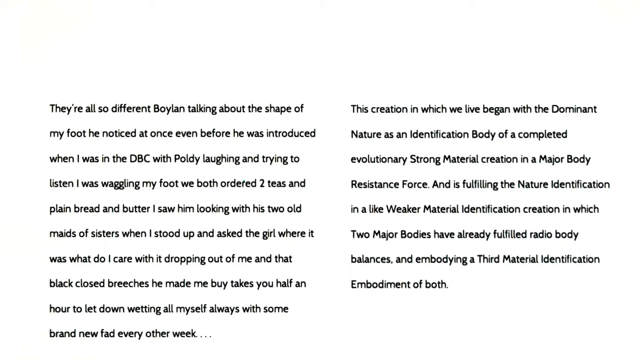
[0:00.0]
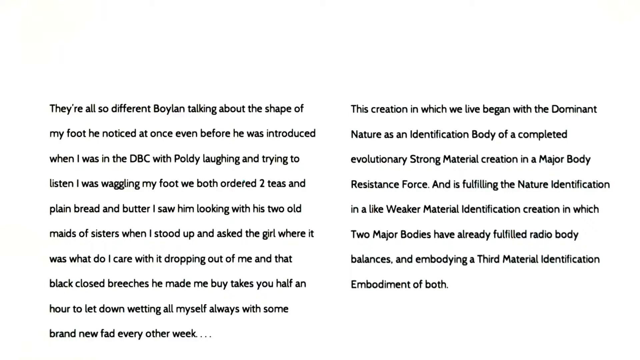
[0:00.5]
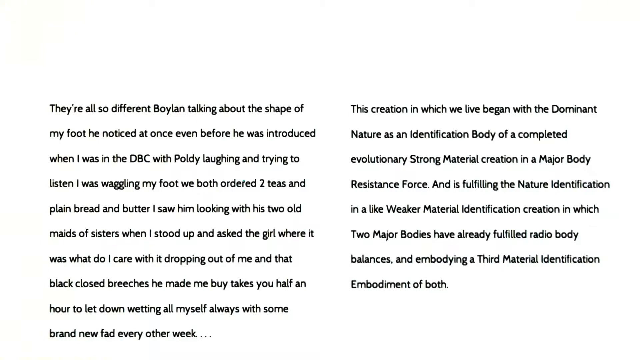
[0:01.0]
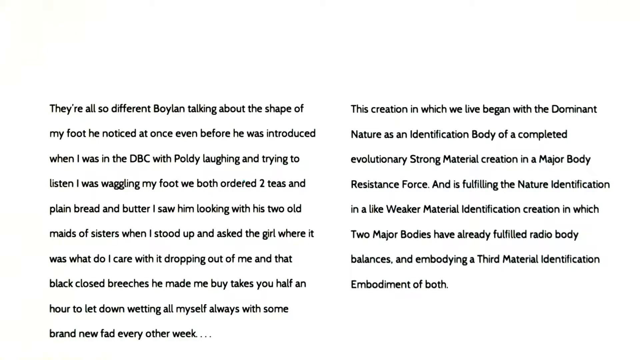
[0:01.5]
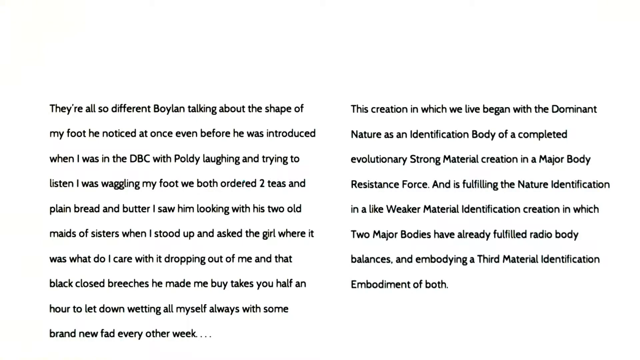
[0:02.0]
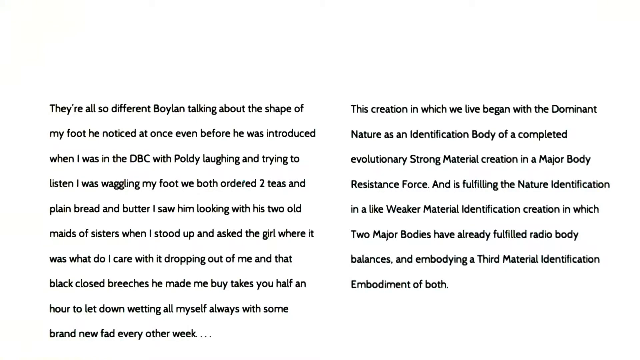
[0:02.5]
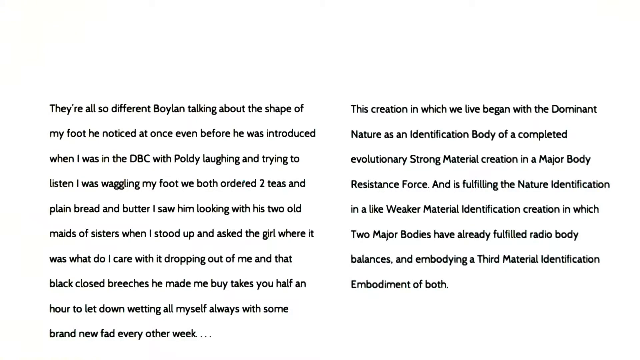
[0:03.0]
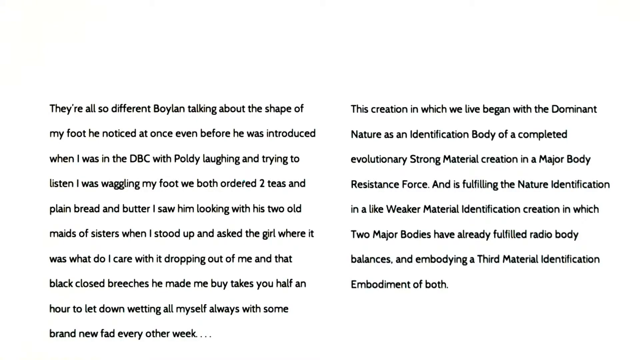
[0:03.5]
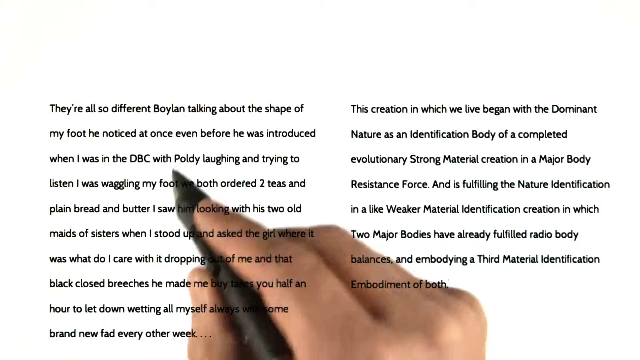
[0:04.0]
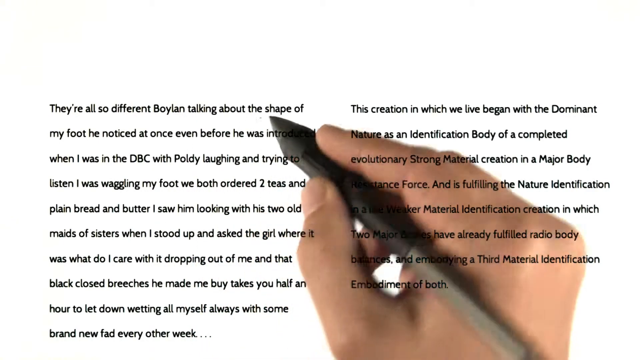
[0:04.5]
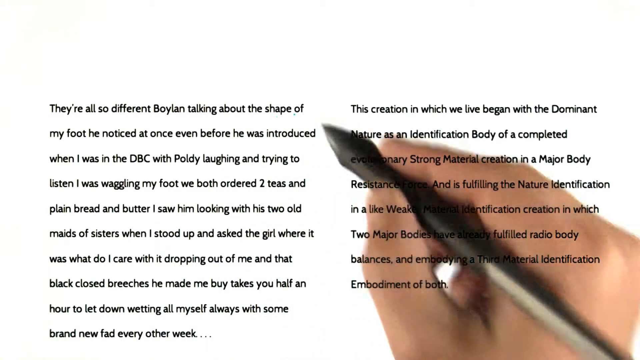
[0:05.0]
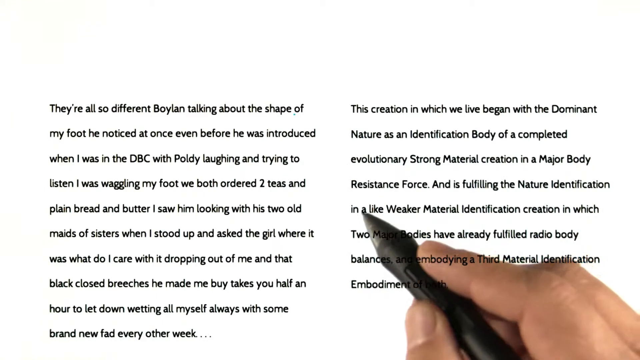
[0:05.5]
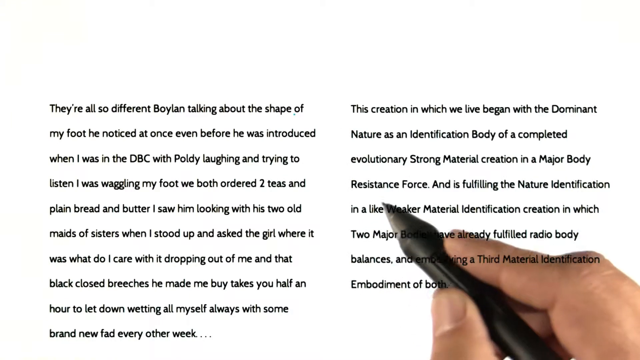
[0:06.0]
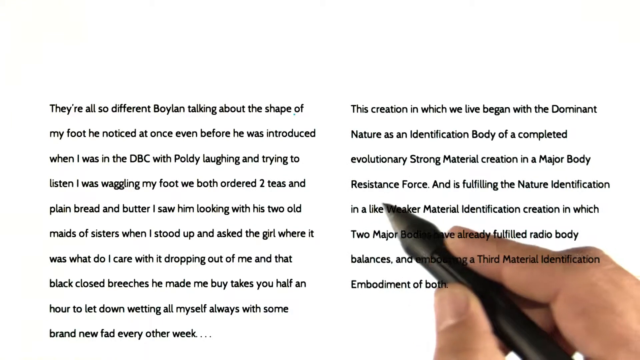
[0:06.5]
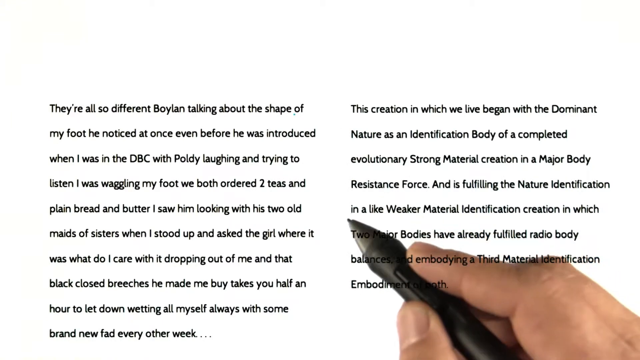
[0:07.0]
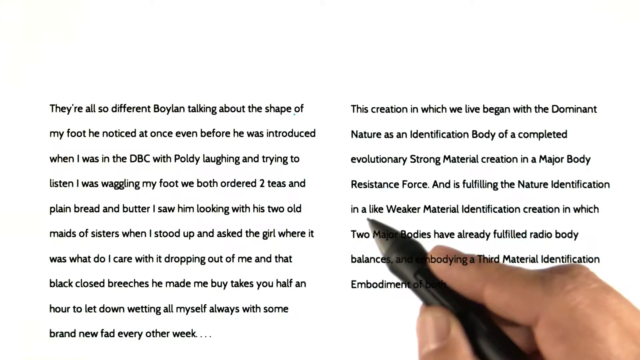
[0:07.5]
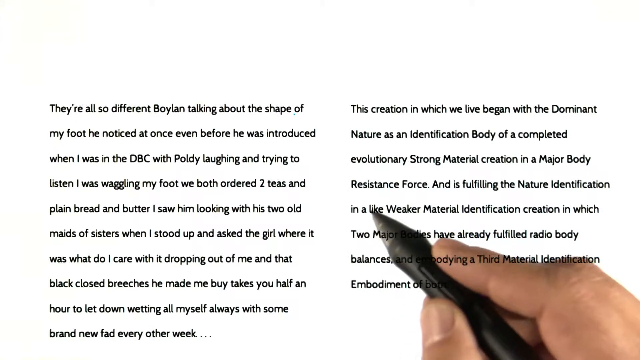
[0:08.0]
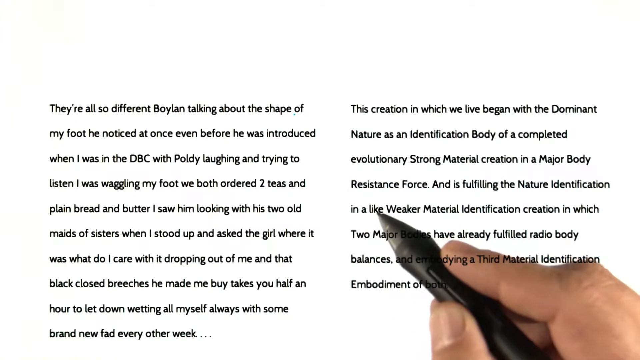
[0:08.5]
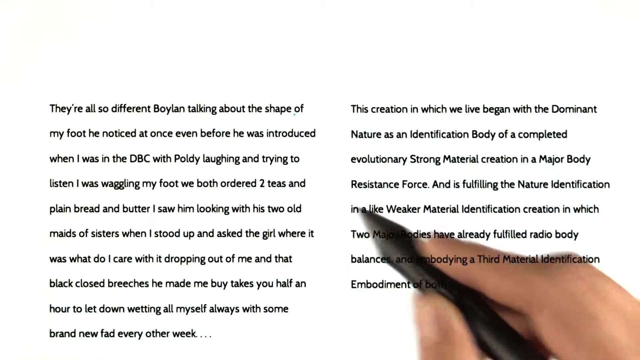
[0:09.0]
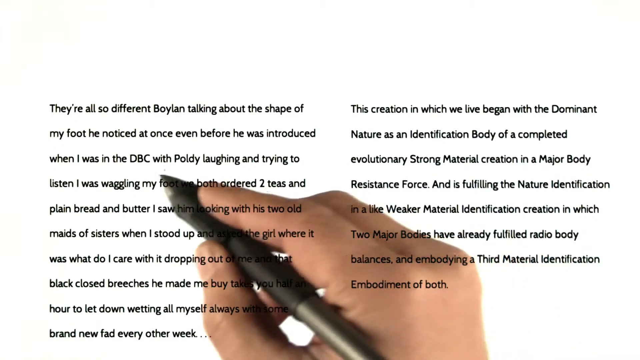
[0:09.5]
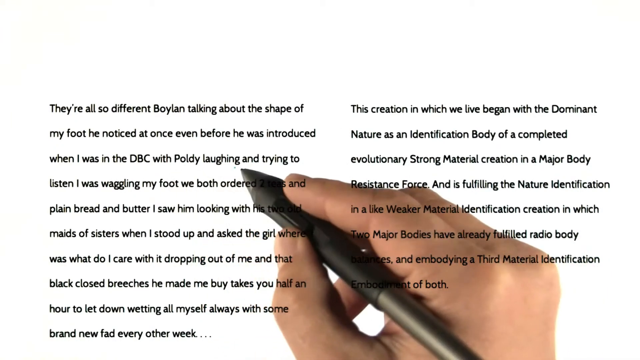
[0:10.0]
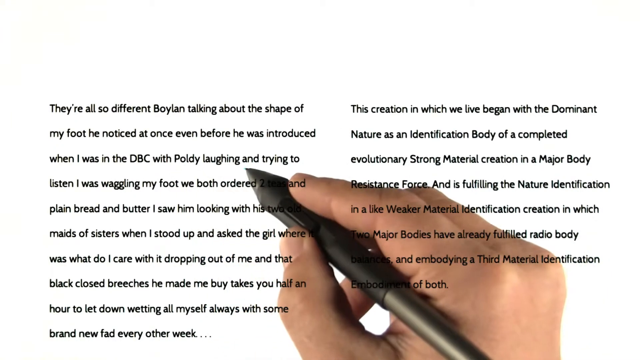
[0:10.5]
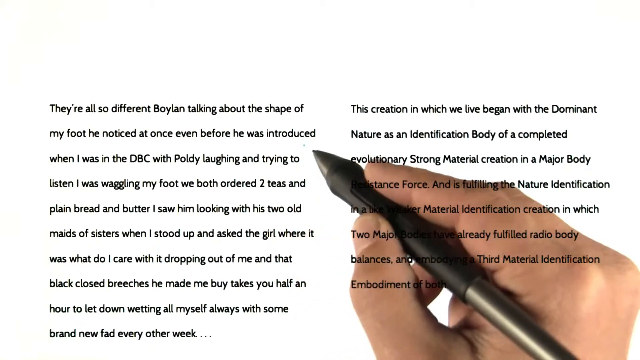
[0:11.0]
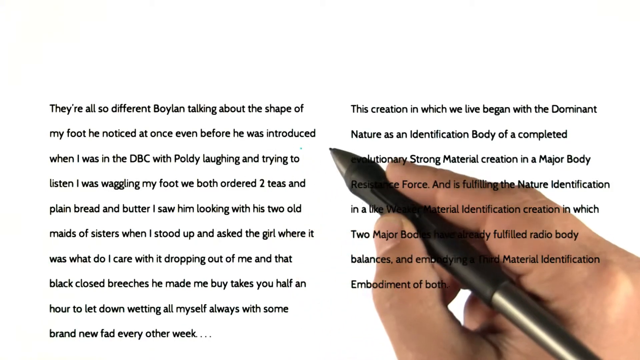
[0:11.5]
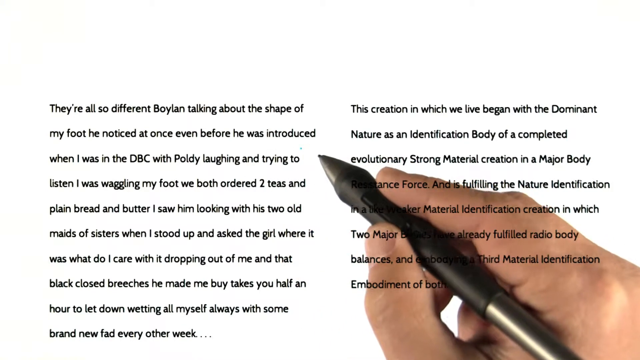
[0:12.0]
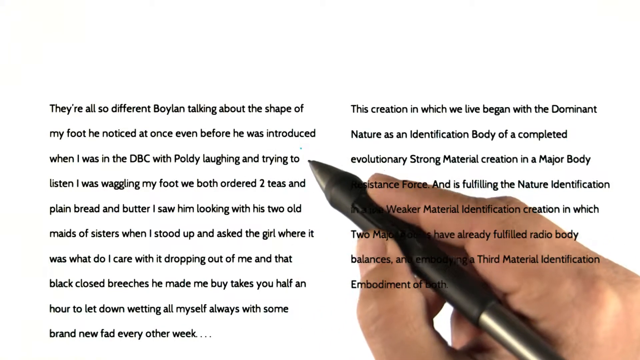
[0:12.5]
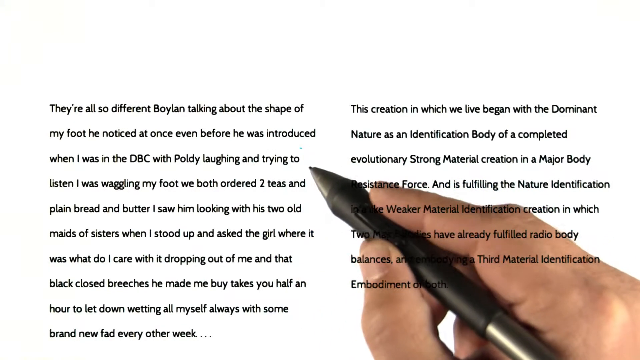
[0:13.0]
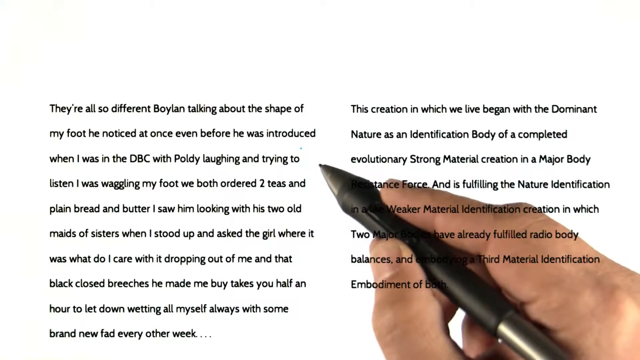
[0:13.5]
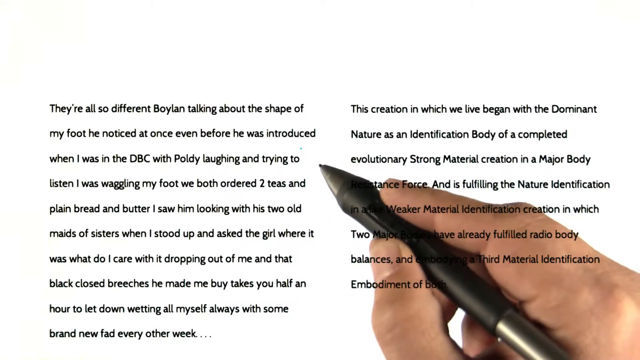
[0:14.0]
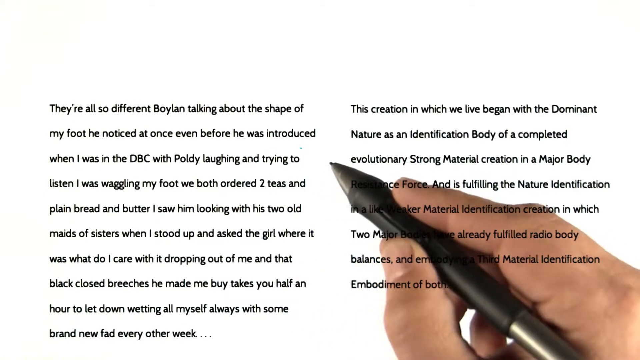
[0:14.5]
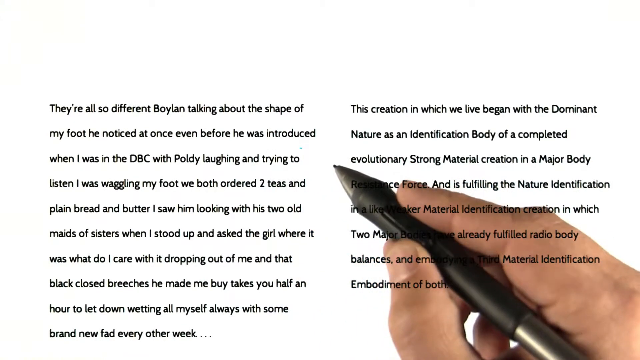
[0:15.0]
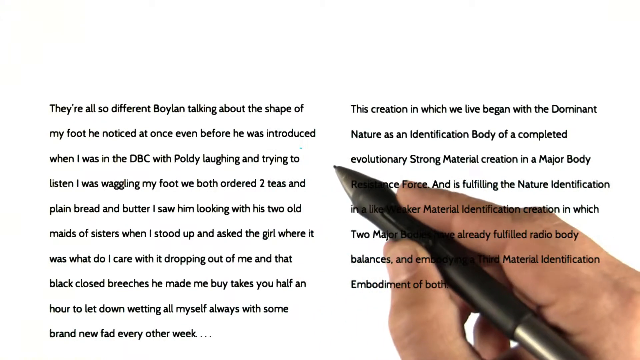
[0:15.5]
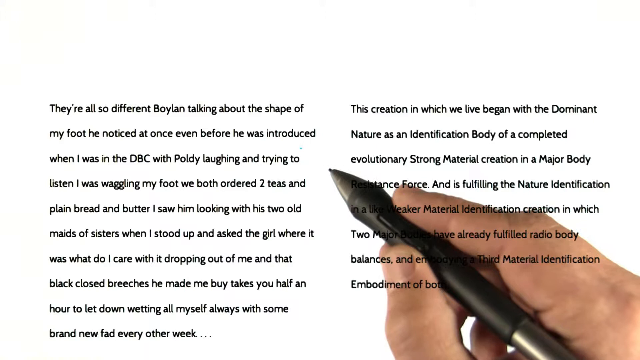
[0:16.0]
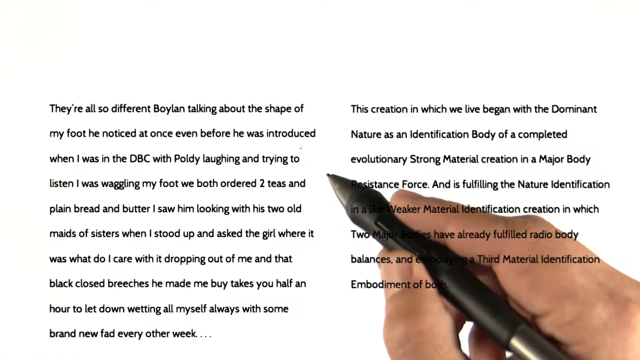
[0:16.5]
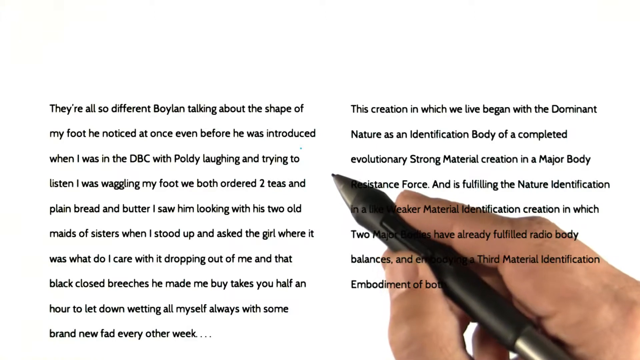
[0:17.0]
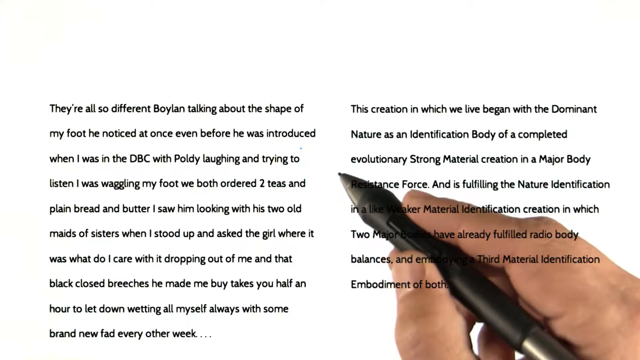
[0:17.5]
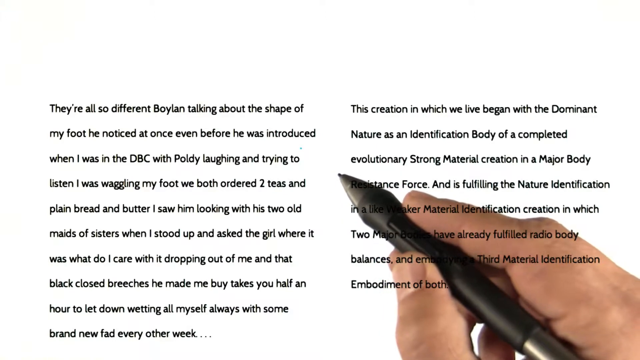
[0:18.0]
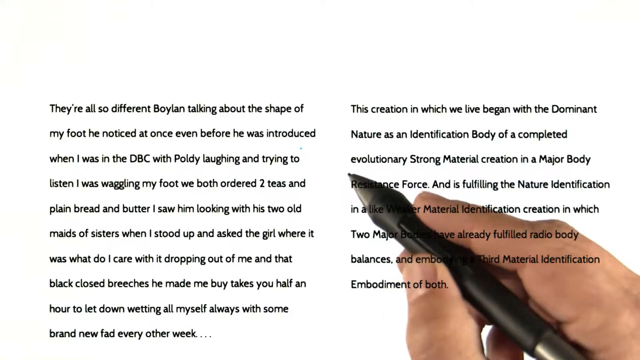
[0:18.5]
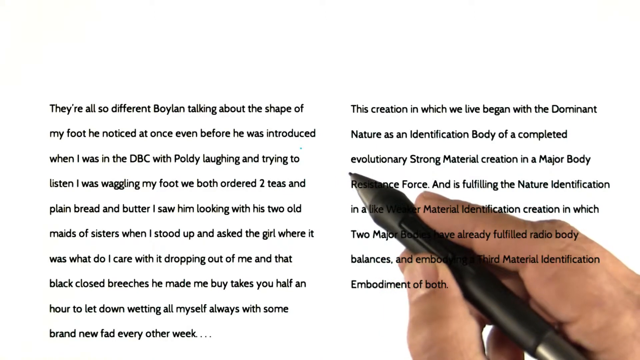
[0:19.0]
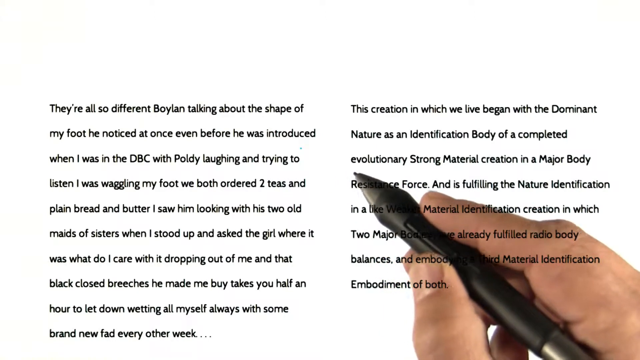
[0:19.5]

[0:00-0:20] Black text appears on a white background. It reads "they're all so different. Boylan talking about the shape of my foot. He noticed at once even before he was introduced." The text is arranged in two paragraphs, one on the left and one on the right. A right hand pops out behind the text, holding what looks like a black pen between the thumb and pointer finger. The hand seems to highlight certain lines, going over them with the pencil or pen without actually leaving a mark. It then seems to rest in the middle, between the two paragraphs.